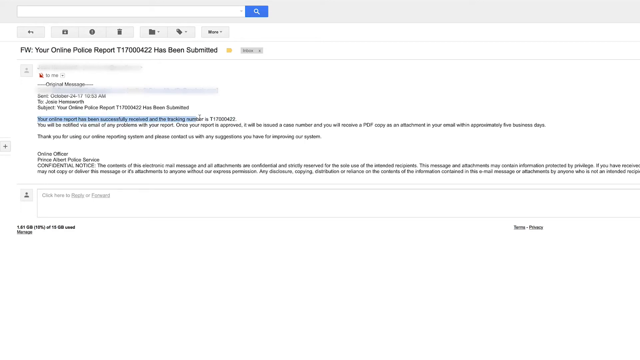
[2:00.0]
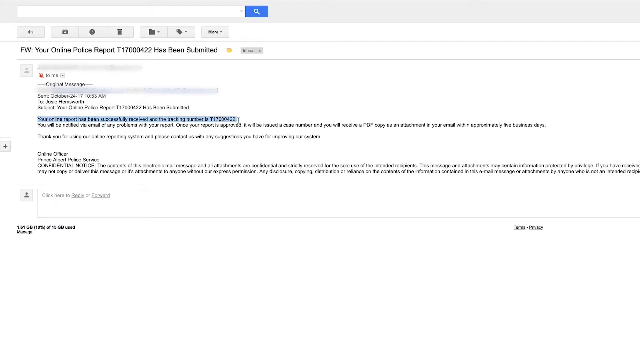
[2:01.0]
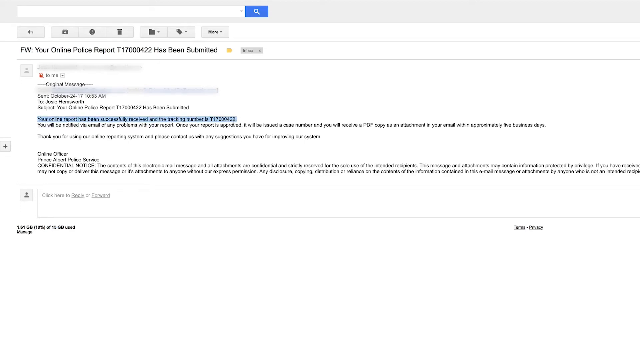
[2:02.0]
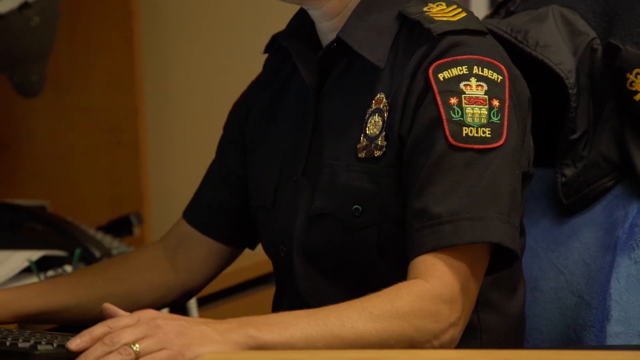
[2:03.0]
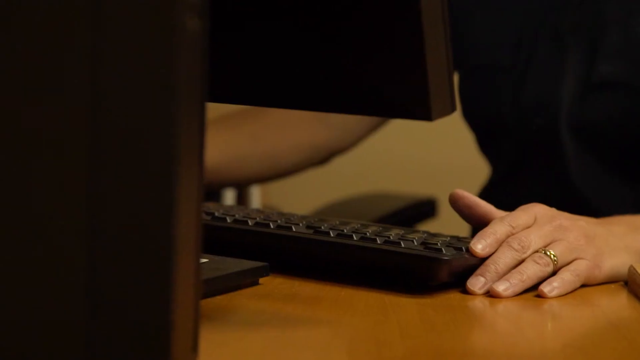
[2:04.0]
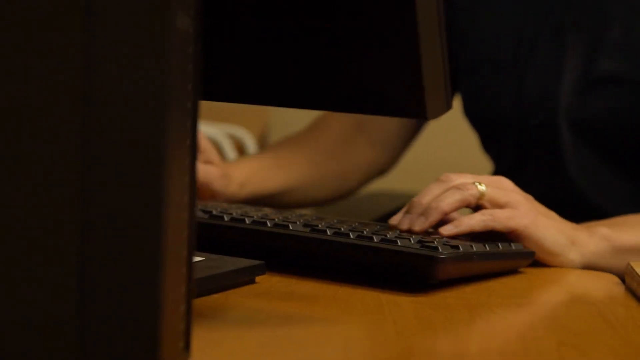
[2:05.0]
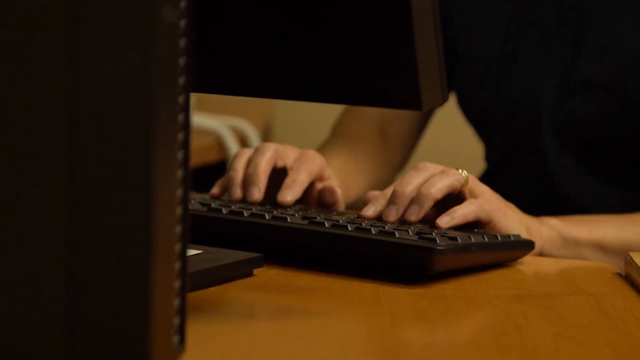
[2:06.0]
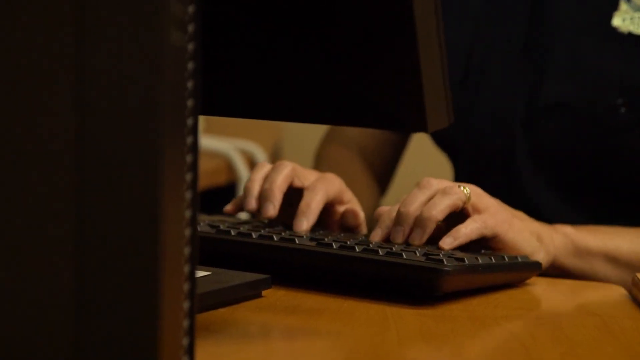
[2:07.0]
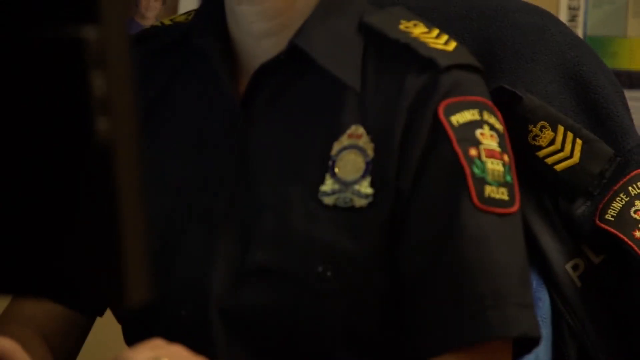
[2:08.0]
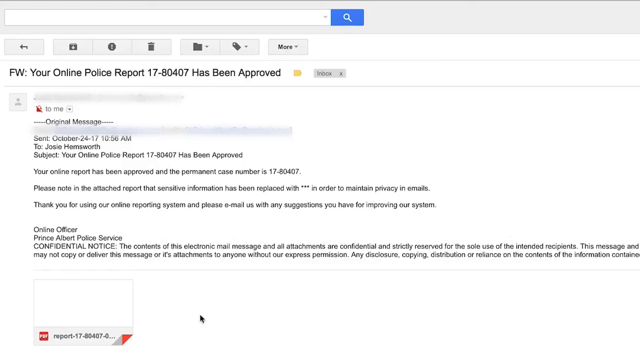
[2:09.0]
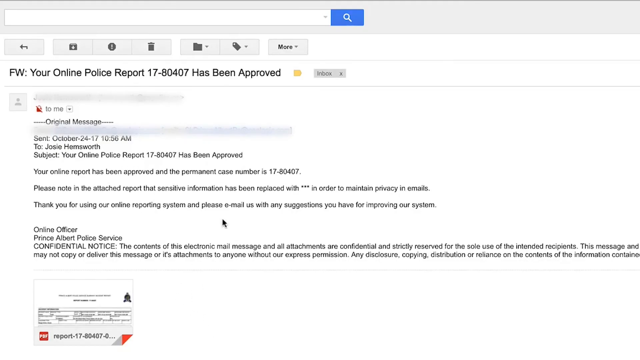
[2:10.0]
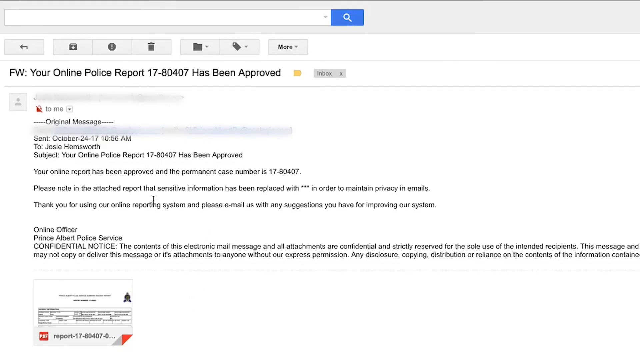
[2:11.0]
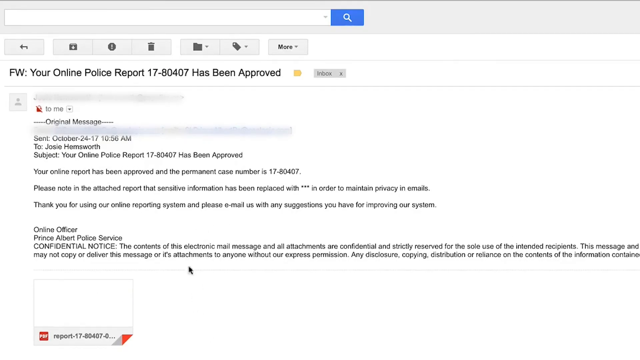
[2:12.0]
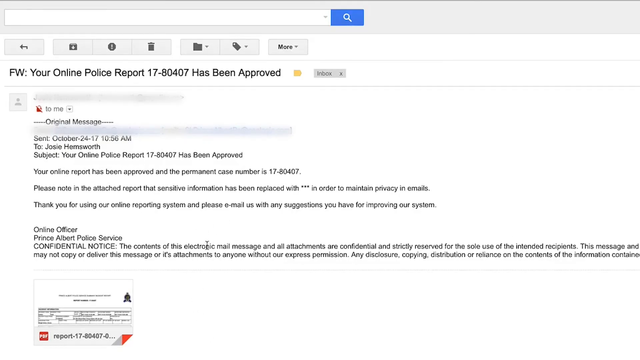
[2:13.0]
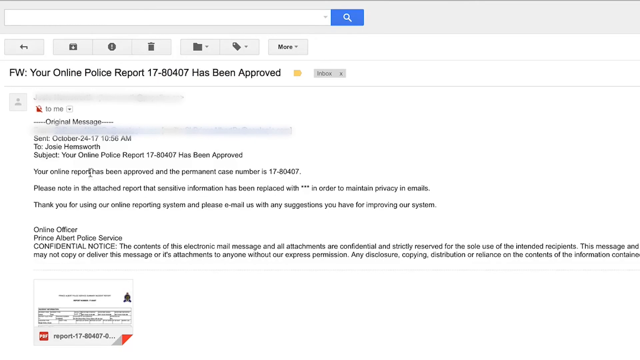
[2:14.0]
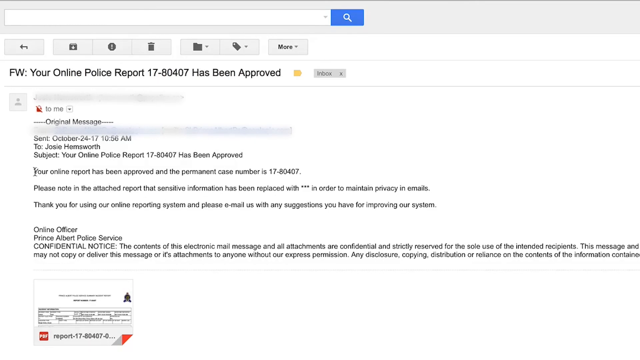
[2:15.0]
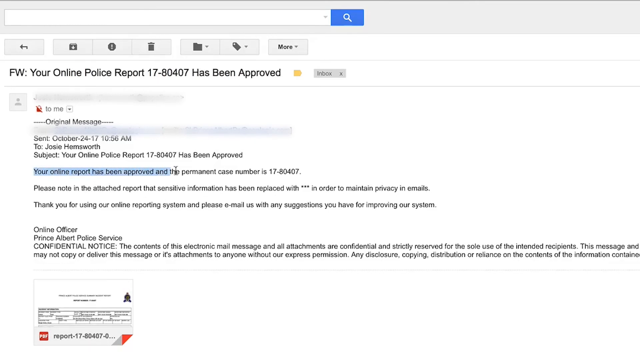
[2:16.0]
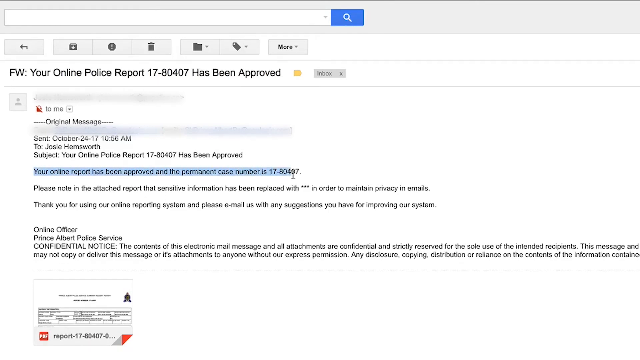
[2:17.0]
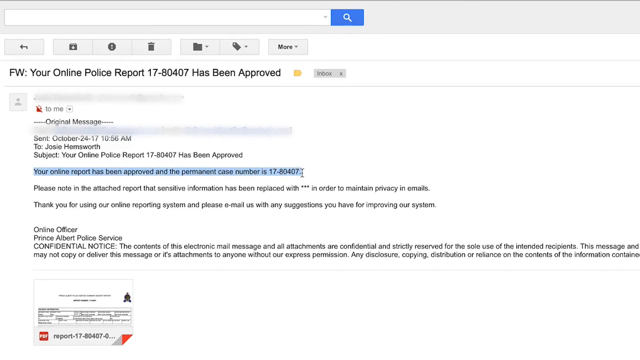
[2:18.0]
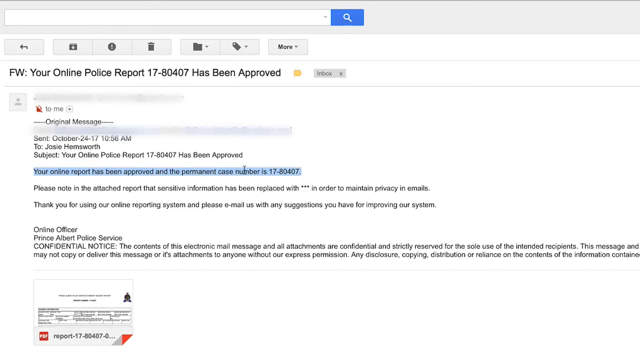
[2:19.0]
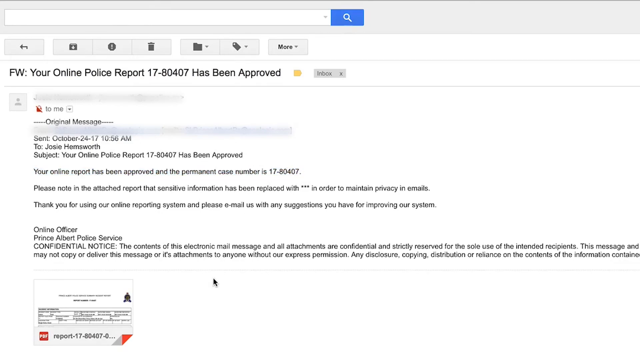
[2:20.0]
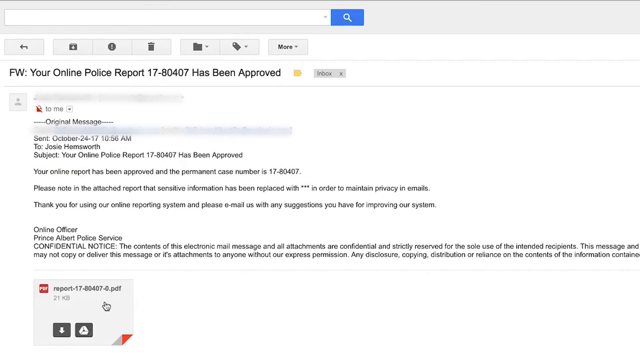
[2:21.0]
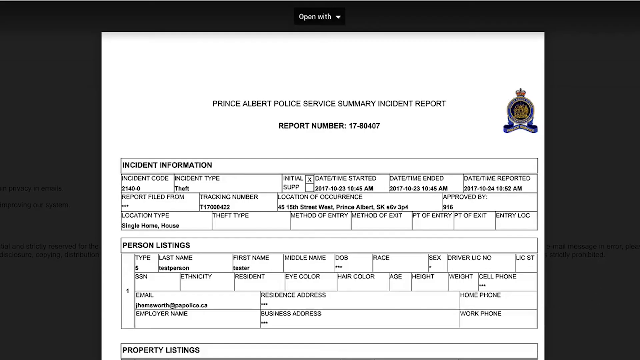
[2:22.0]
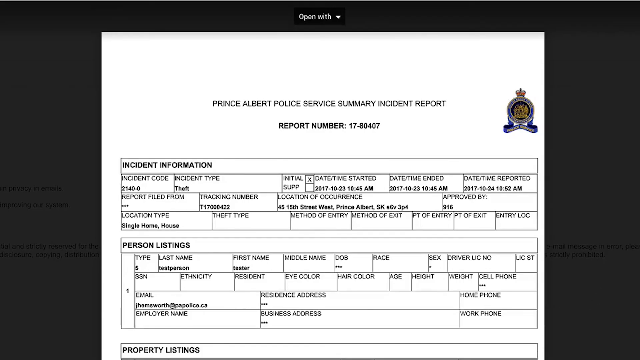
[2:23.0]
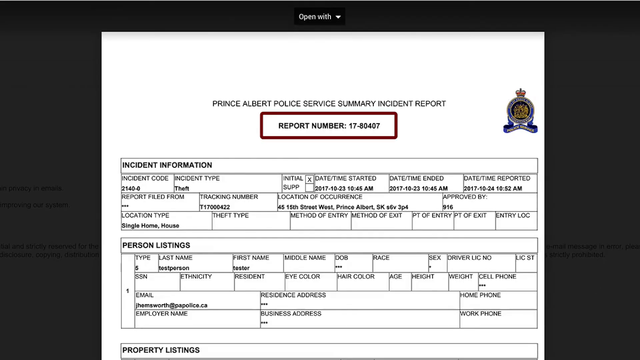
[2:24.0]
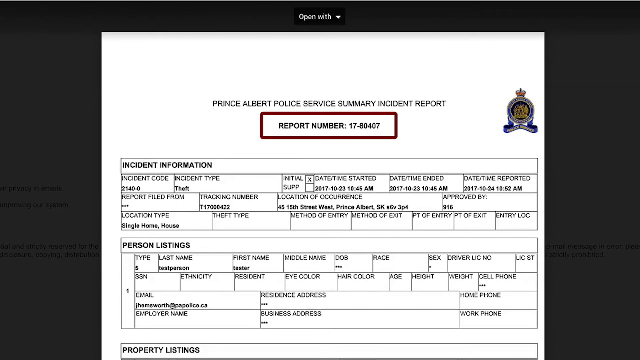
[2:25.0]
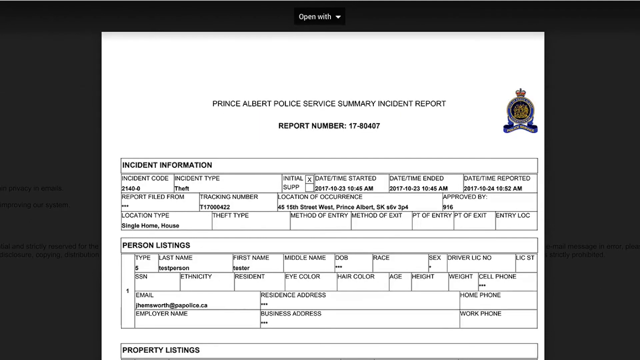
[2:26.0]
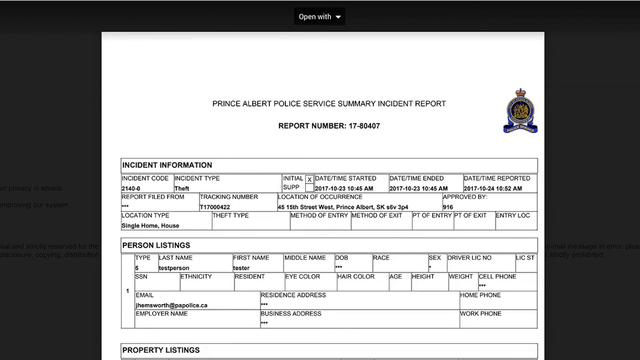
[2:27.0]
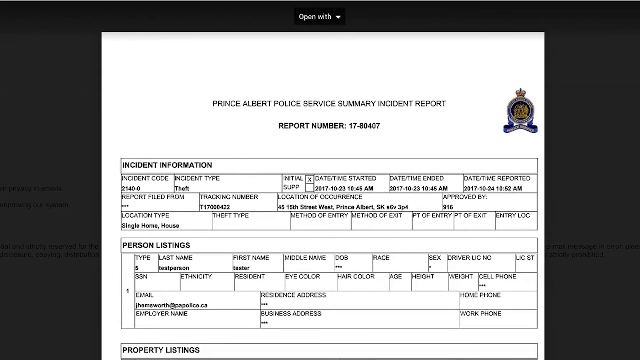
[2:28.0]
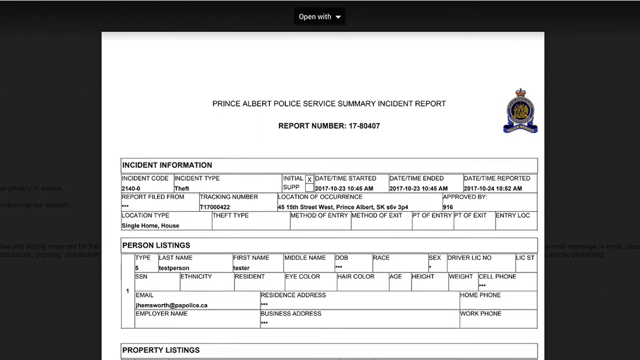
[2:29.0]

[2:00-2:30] A page with a search button appears, followed by an email titled "FW: your online police reports" stating "Your online police report has been approved", with further information and an attachment. A confidential notice reads "The content of this electronic mail message and all attachments are confidential and strictly reserved for the sole use of the intended recipient." The approved report comes with a permanent case number.